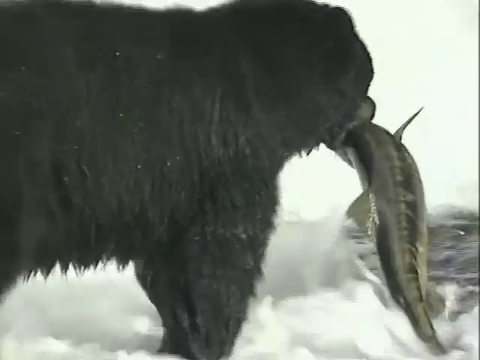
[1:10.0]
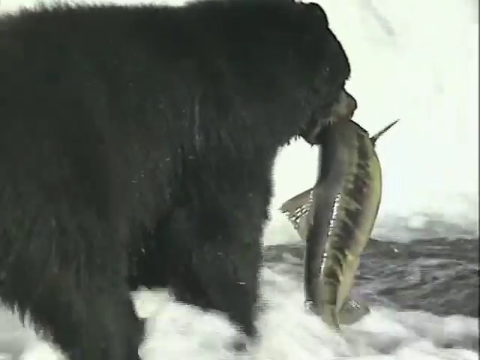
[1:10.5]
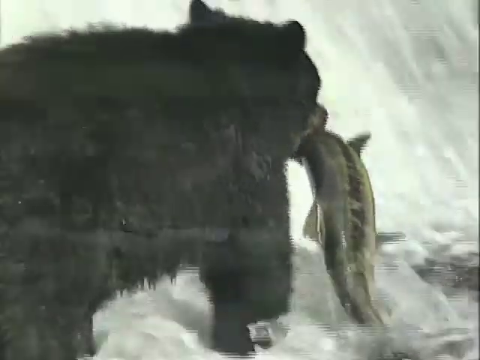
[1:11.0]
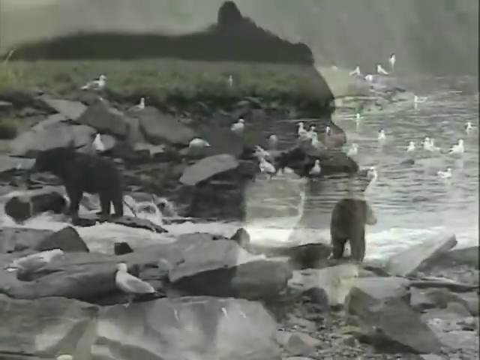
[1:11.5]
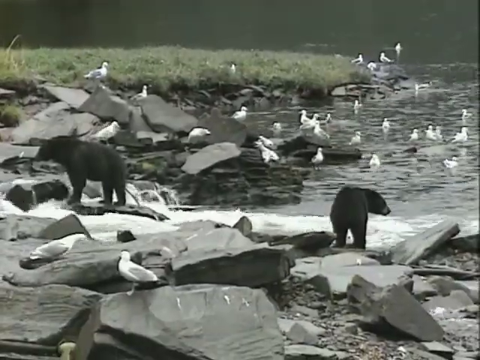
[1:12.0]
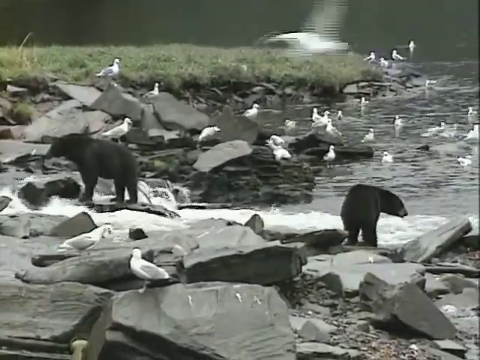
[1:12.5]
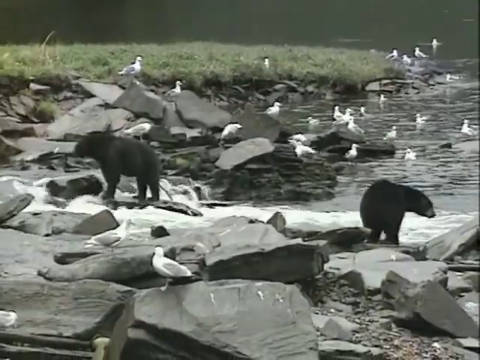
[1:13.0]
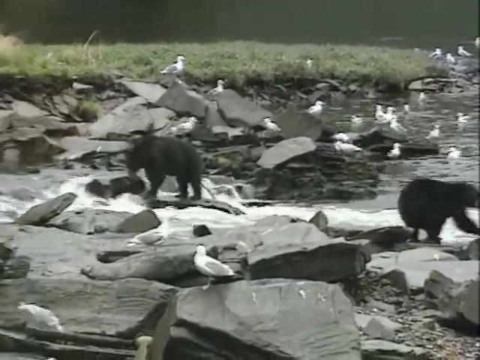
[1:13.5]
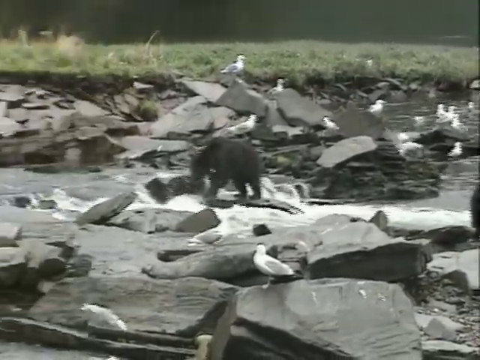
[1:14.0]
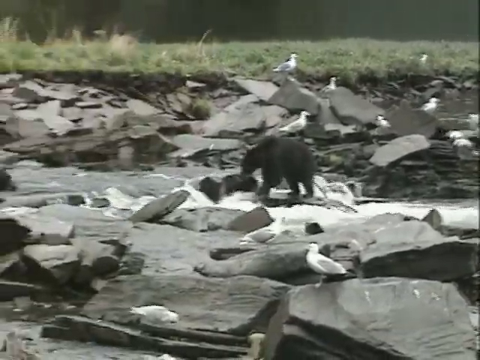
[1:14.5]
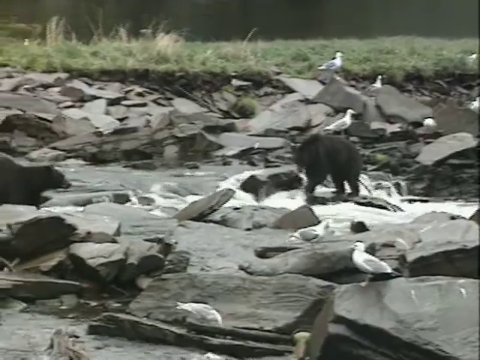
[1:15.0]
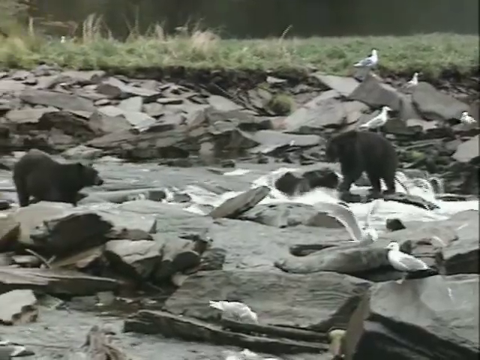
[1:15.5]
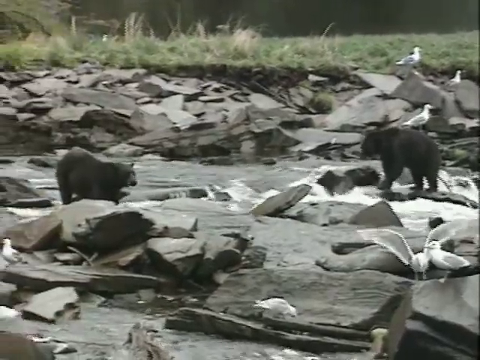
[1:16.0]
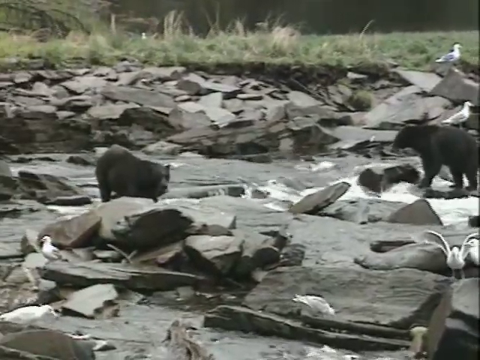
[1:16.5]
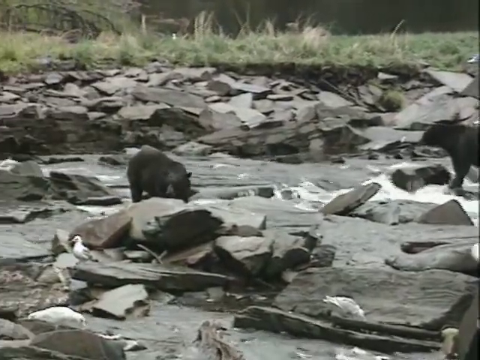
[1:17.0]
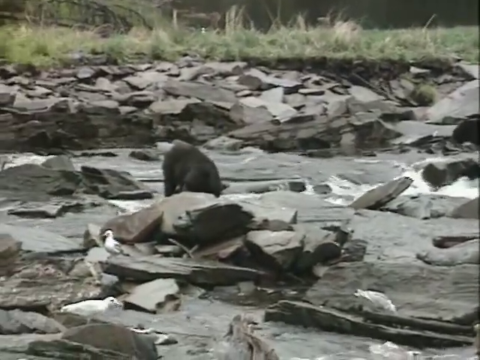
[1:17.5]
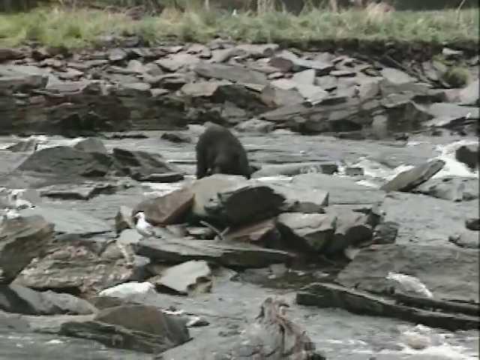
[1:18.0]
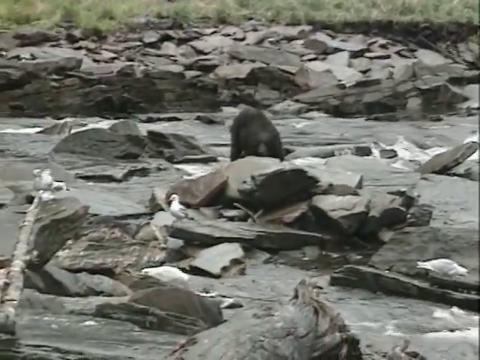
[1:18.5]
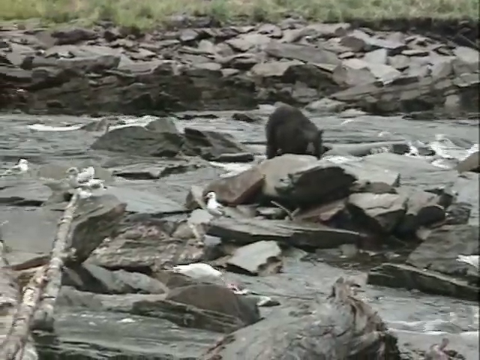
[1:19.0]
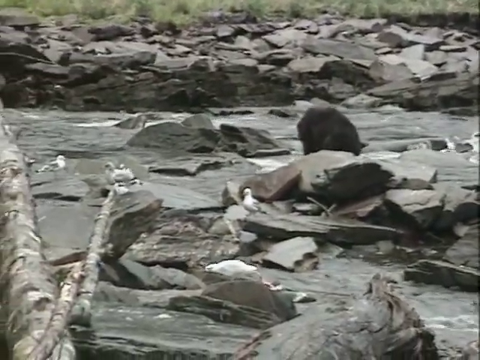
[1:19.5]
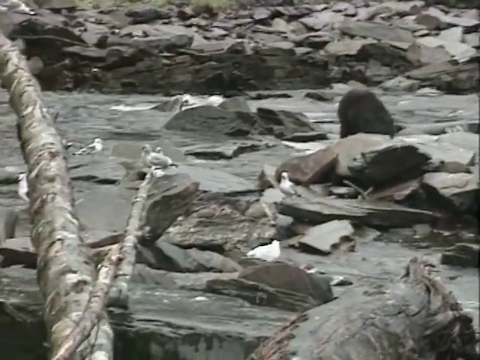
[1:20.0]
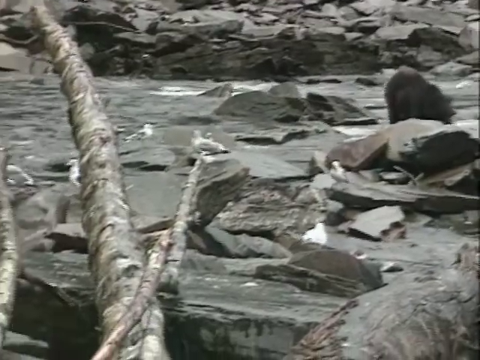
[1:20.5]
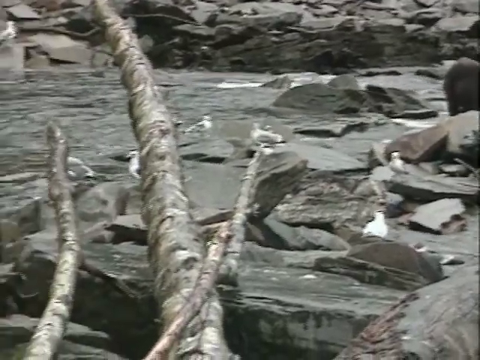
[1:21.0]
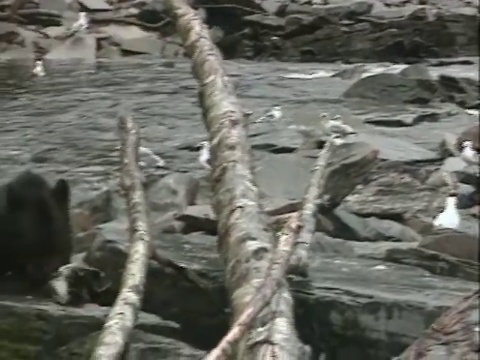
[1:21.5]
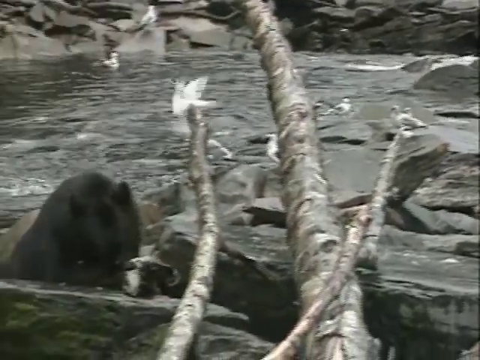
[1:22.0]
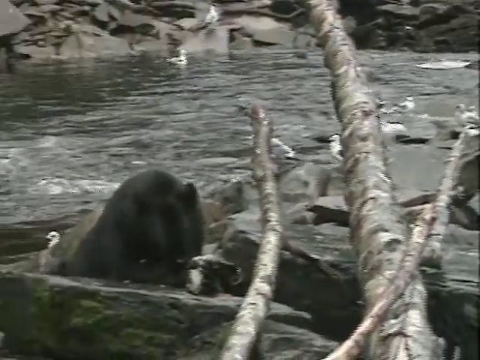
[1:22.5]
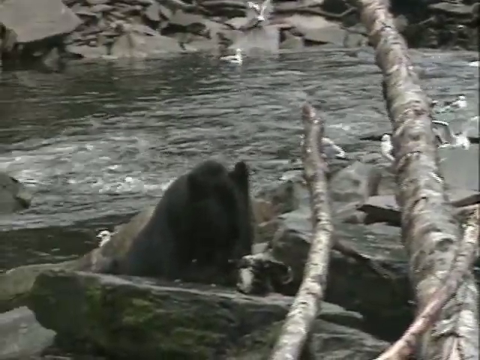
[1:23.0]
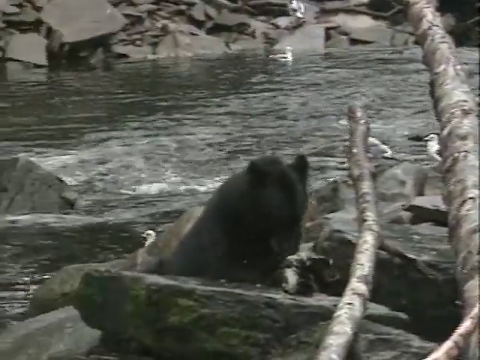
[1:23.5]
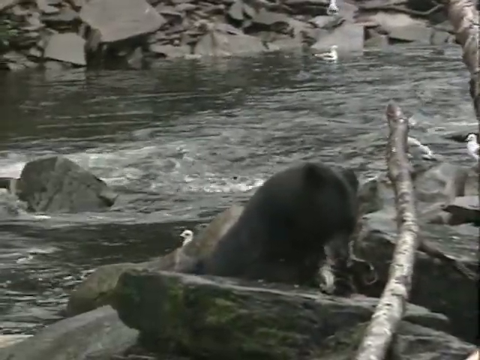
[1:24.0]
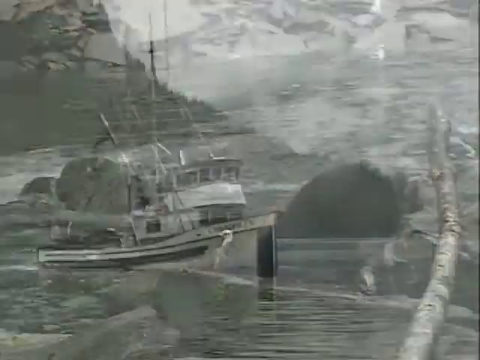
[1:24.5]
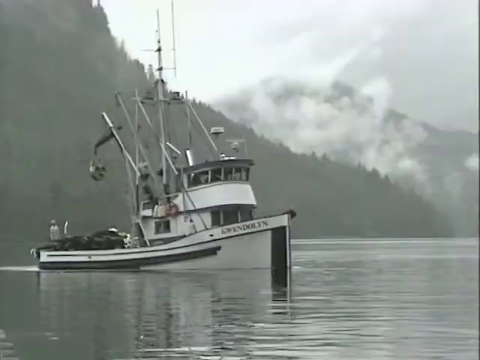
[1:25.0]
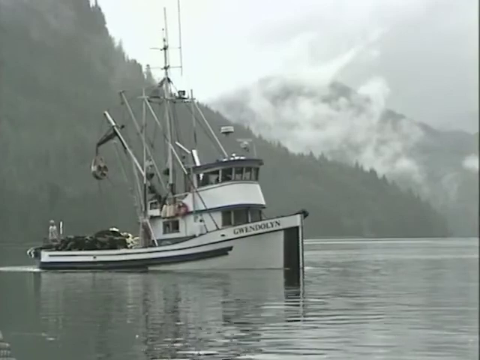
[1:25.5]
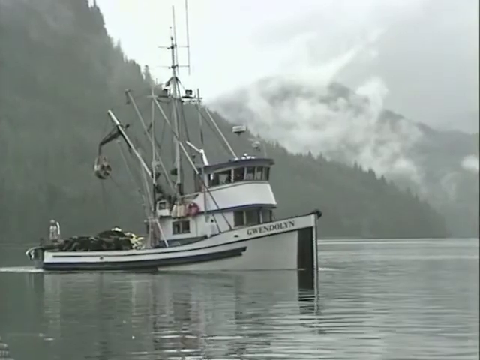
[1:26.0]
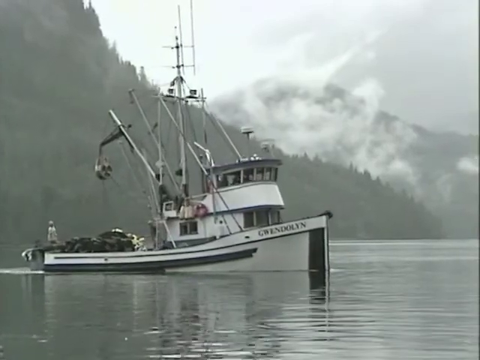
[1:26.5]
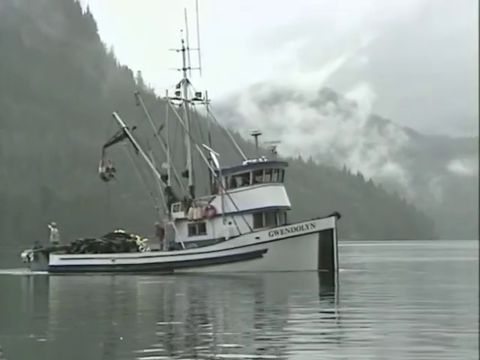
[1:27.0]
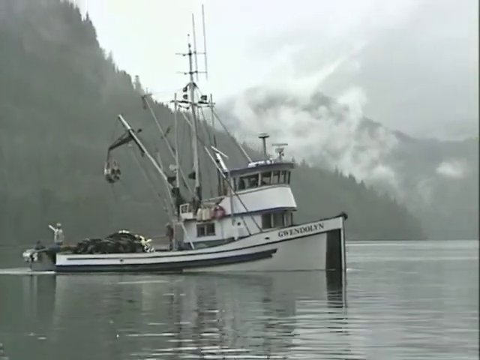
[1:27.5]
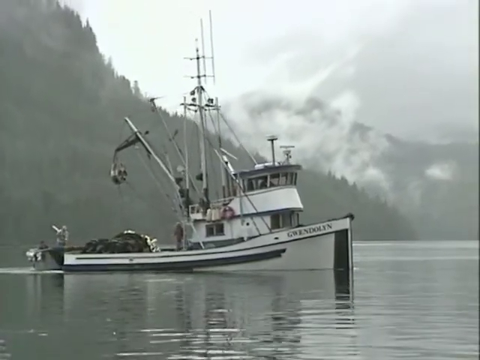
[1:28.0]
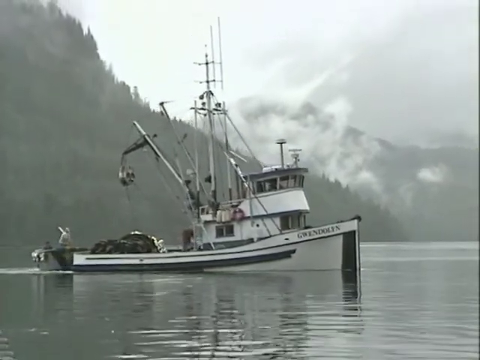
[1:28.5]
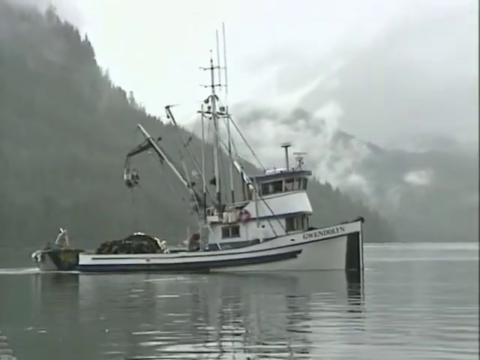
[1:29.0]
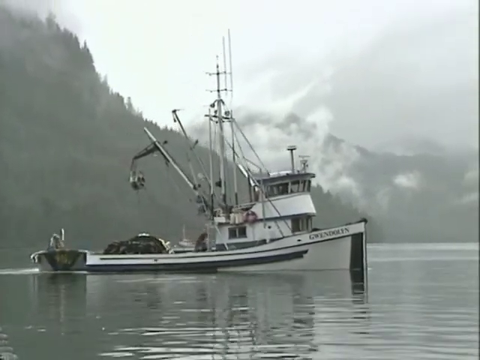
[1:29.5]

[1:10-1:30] A black bear is seen from the back, showing its right side, with a large green fish in its mouth that looks like a salmon; the bear walks through a river where the water is white and forming suds. The scene changes to a faraway shot of an area of the river with gray and black rock slabs scattered throughout it, a group of slabs near the top of the screen and another near the bottom, with the river running through them. About 30 or 40 white seagulls are on top of the rocks and in the water around them, and there are black bears there. A third bear on the left side of the screen looks up the river, apparently hunting for fish. The camera continues to move to the left, revealing another black bear that appears to be eating a fish on a stone slab. Then a white boat appears with the name Gwendolyn on the front right side. Multiple vertical beams shoot up from the boat. Near the front is a section for the captain that looks to be a two-story structure, with a long white section at the bottom and a shorter blue section at the top, and windows in front of each section. In the background is a mountain full of trees, with misty white clouds rising above the trees. The boat moves to the right across the body of water.